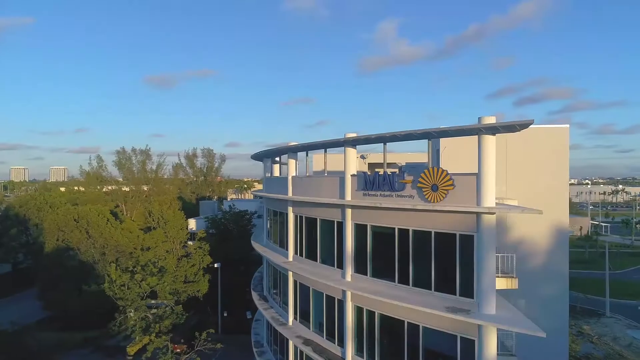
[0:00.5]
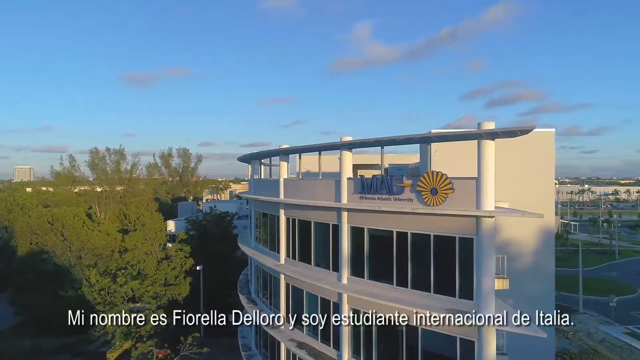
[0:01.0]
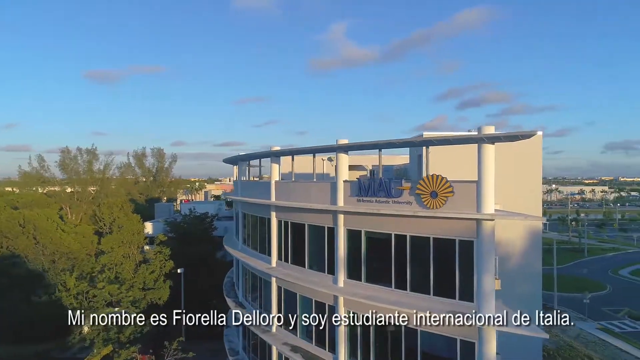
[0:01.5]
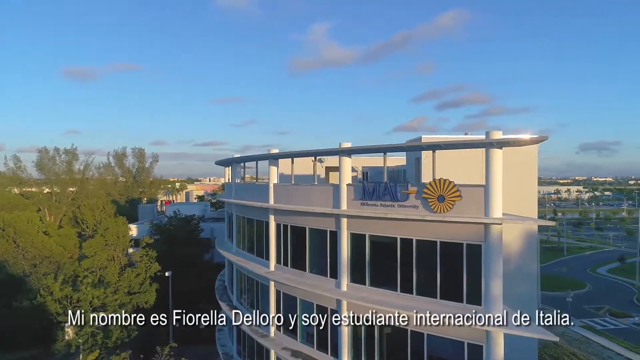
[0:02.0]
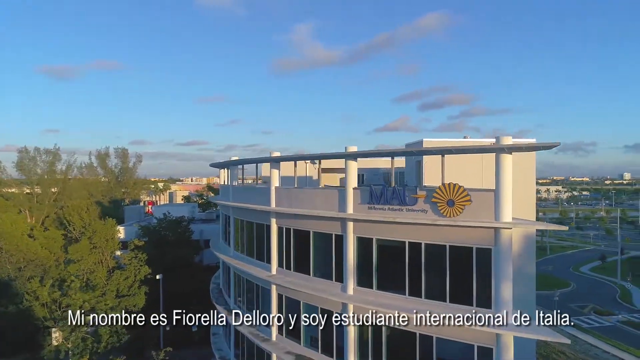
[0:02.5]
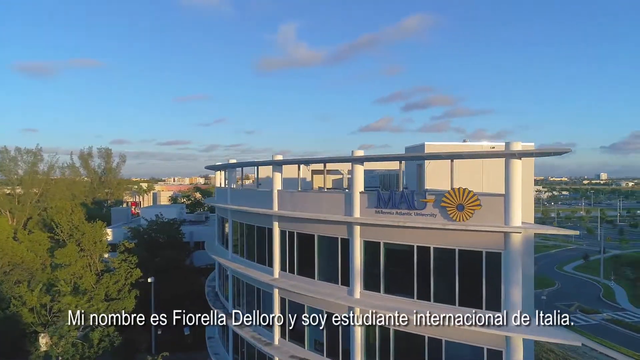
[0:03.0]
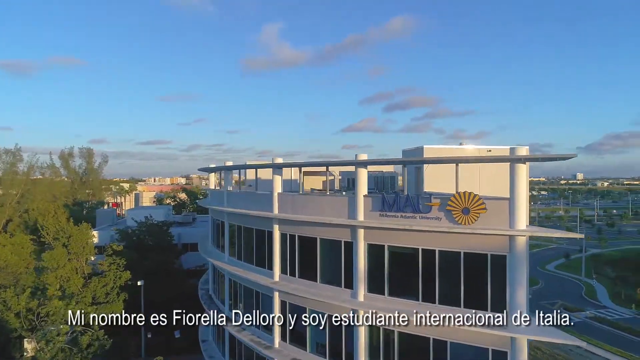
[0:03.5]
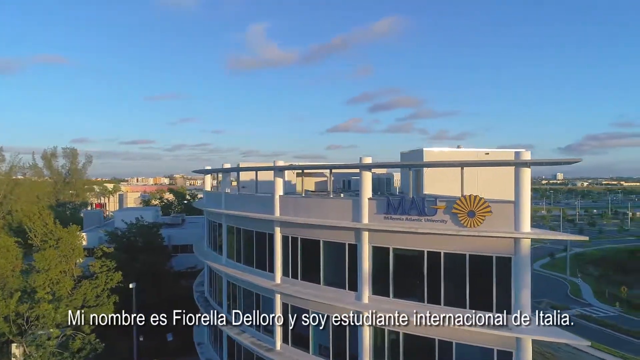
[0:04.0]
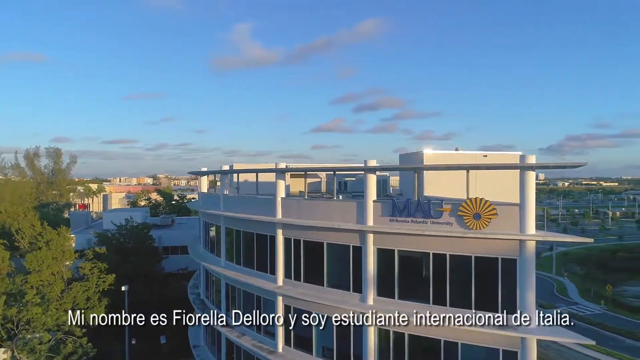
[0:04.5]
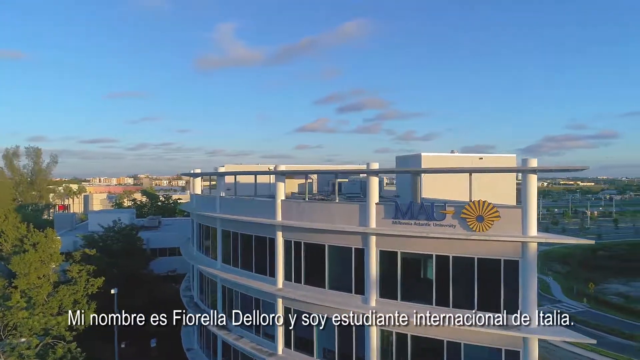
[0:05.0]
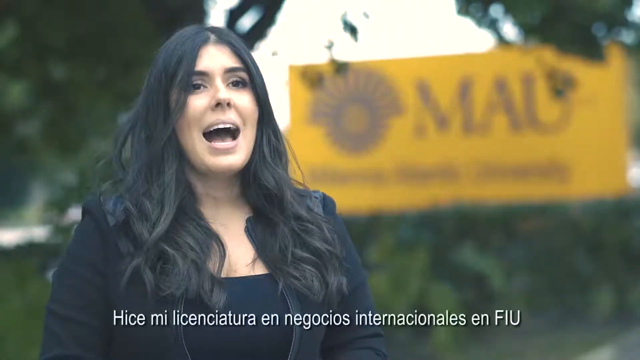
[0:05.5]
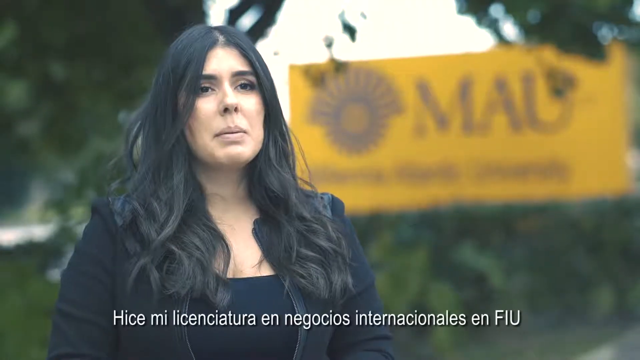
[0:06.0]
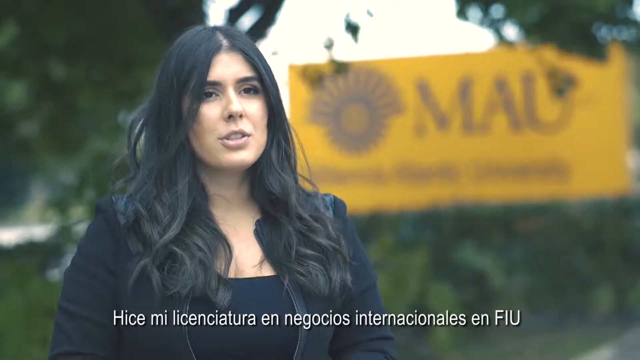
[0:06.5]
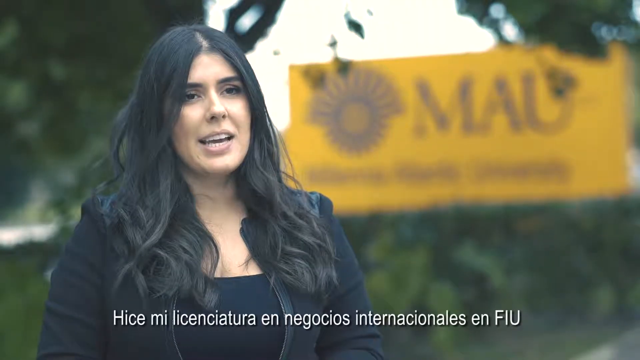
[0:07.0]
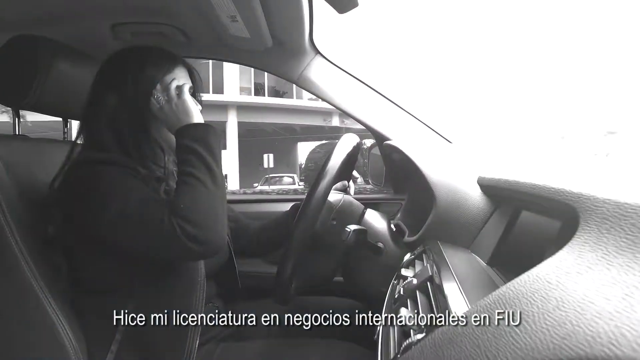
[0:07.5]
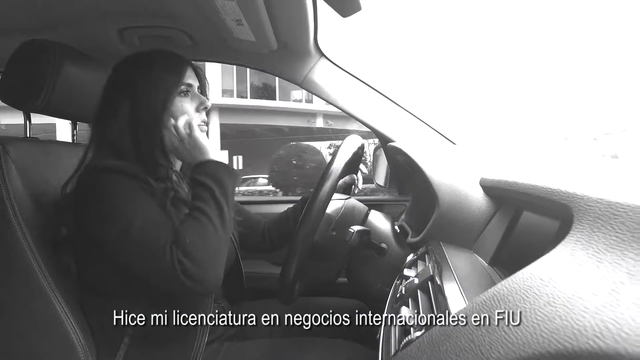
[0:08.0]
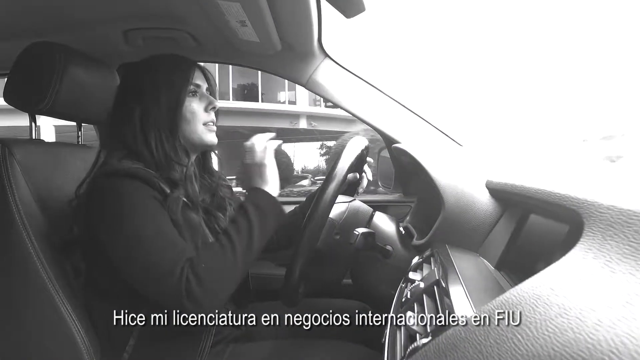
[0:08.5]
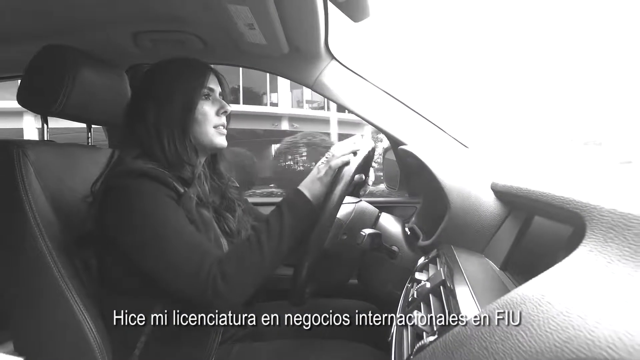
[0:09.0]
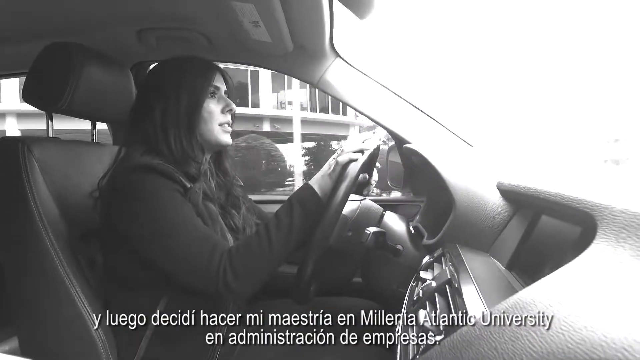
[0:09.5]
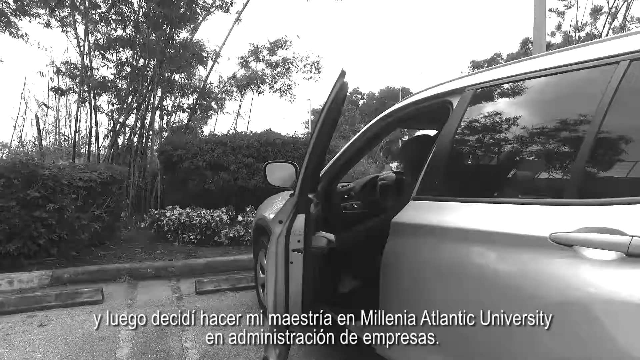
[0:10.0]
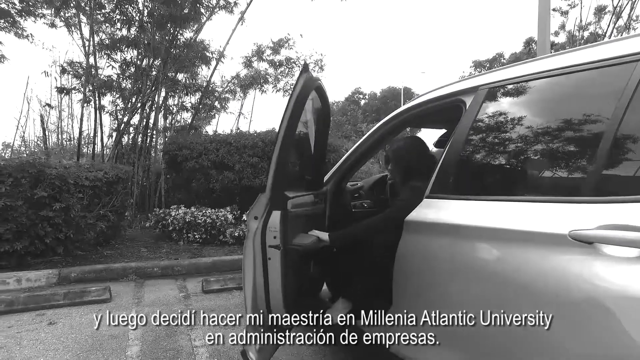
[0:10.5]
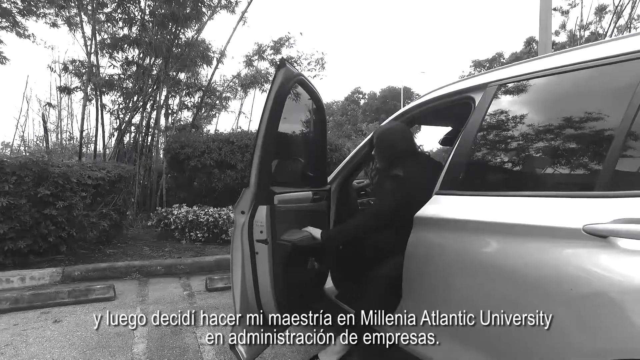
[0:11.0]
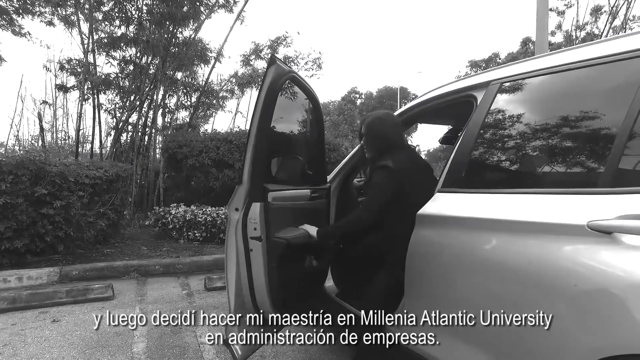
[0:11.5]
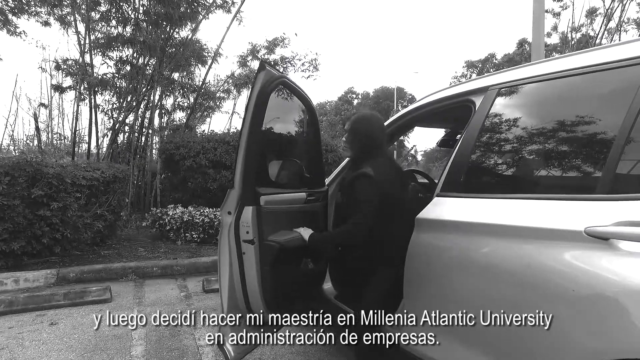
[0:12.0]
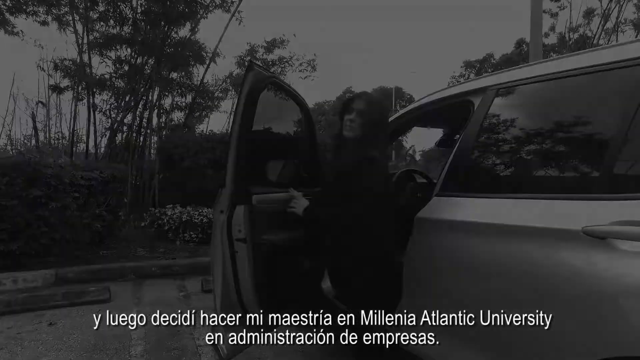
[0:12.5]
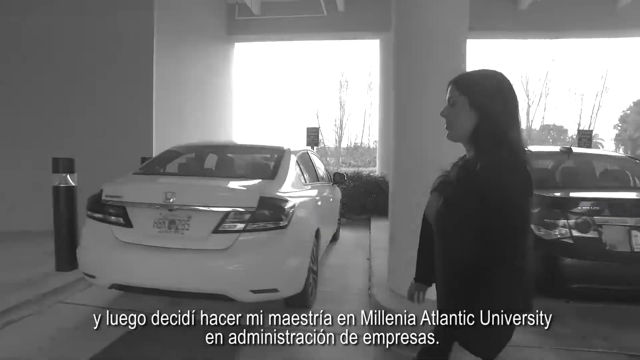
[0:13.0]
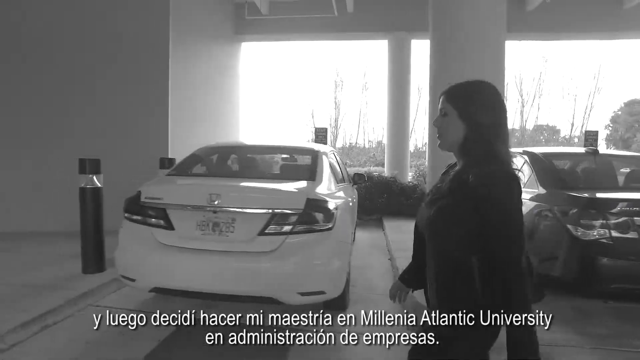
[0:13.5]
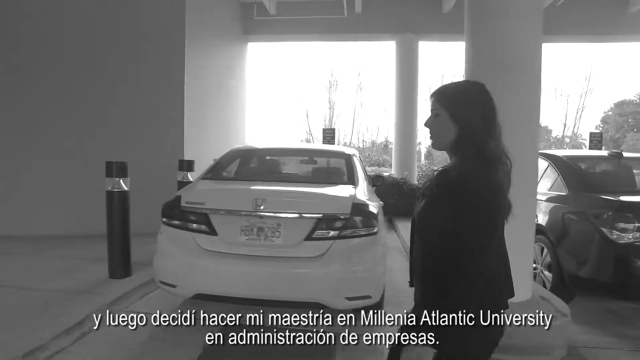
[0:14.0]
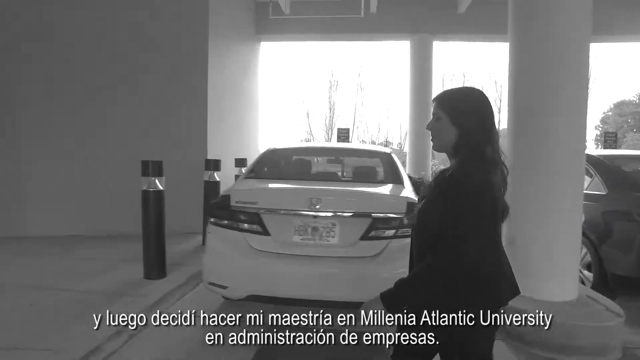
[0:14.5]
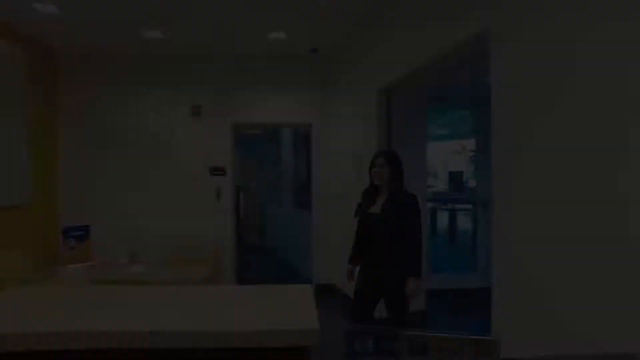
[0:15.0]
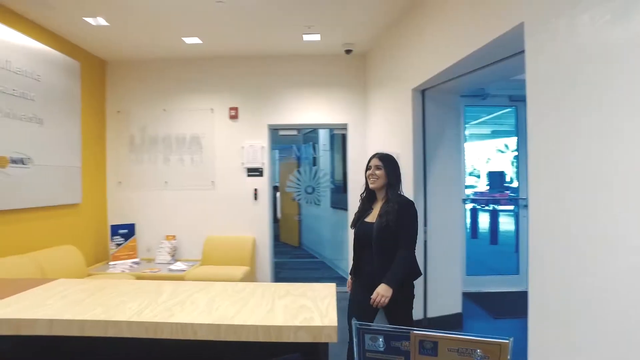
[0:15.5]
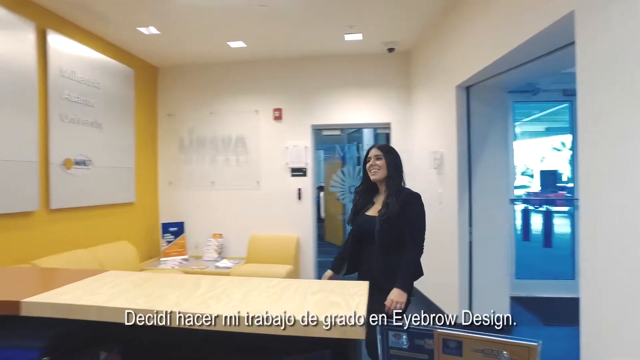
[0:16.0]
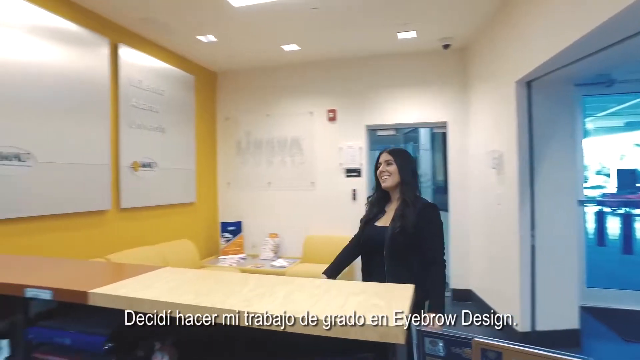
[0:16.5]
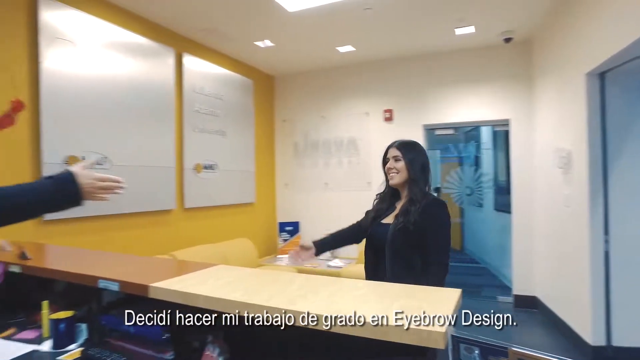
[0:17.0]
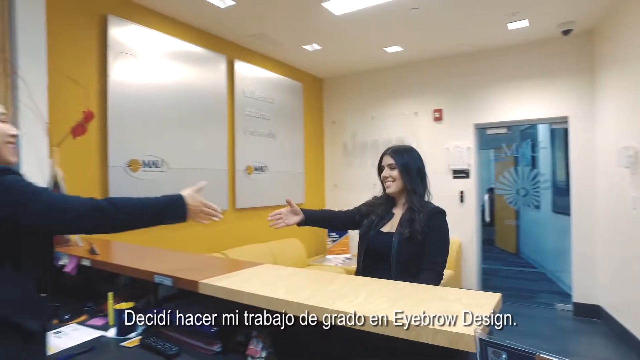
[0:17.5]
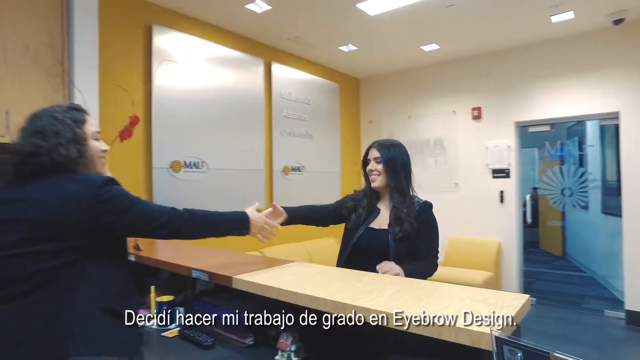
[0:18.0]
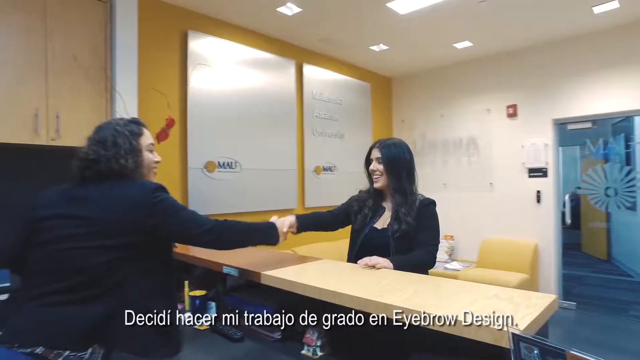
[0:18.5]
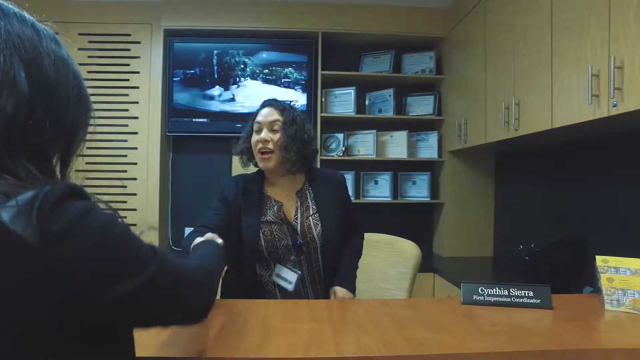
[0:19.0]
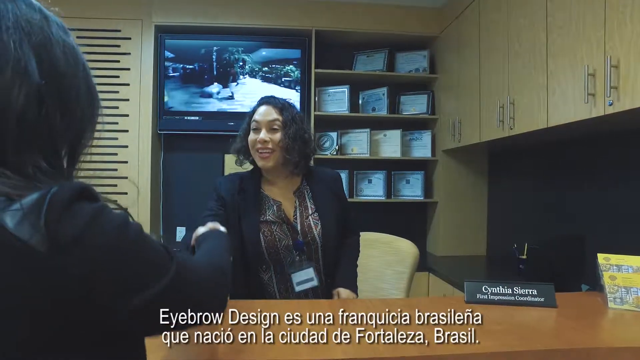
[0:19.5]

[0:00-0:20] A big, very tall building is shown. A woman talks while being transported on a big motorbike that is moving. She keeps talking, and then she jumps in a car. The picture is now in black and white, and below there are titles written in a language other than English. Coming out of the car, she walks straight toward the building, passing through the parking area, where other cars are parked. She continues walking, enters the building and goes straight to the reception, smiling. She greets the receptionist; they shake hands and both smile at each other. Behind the receptionist there is a TV on the wall, and there are films on the shelves of the reception.